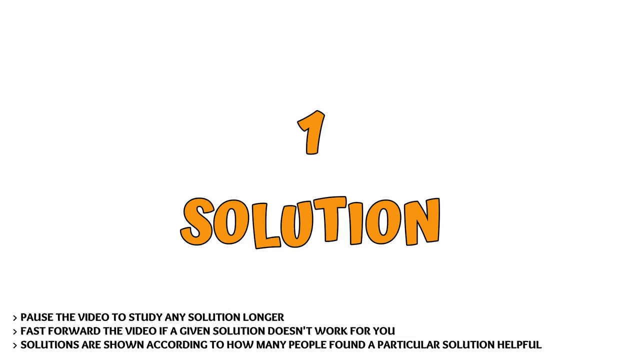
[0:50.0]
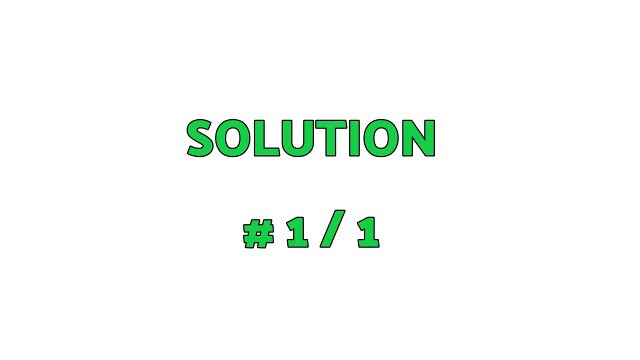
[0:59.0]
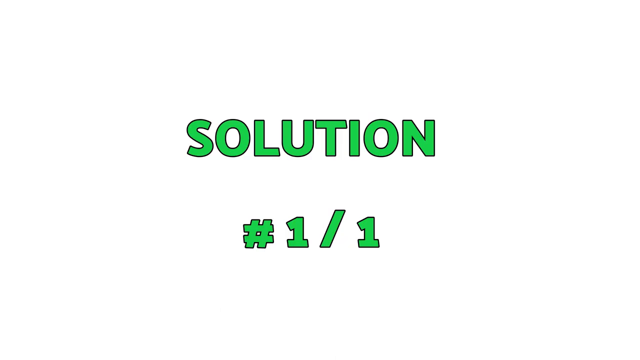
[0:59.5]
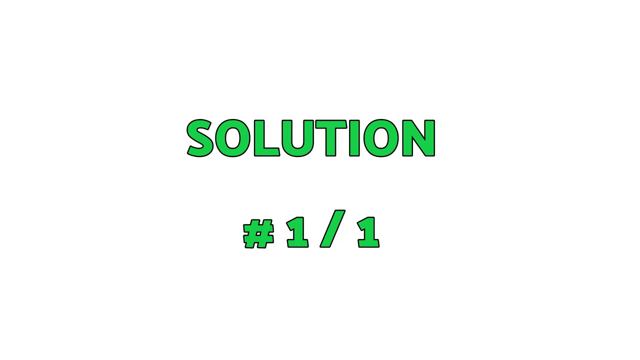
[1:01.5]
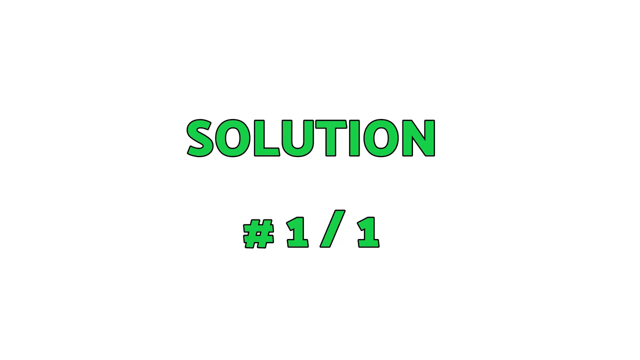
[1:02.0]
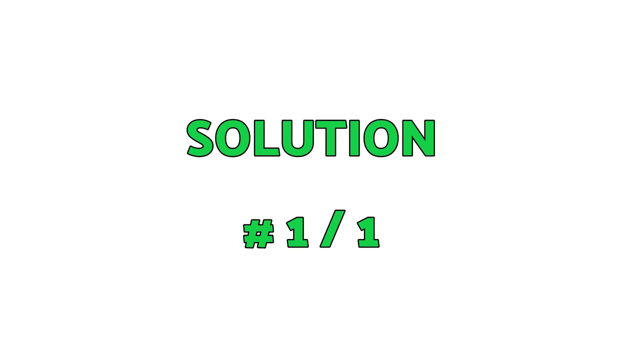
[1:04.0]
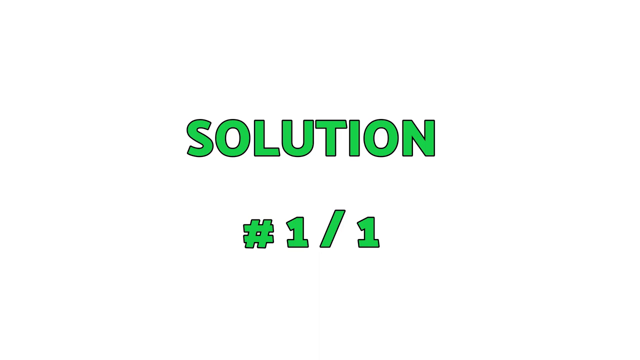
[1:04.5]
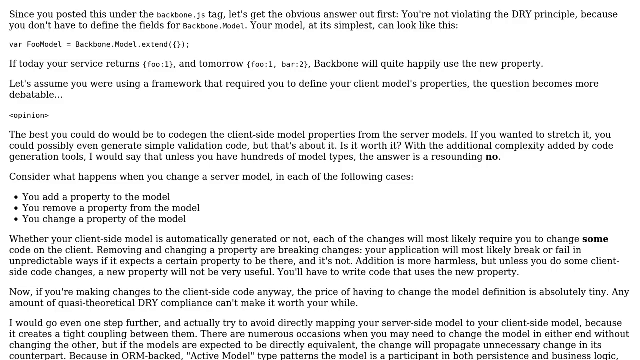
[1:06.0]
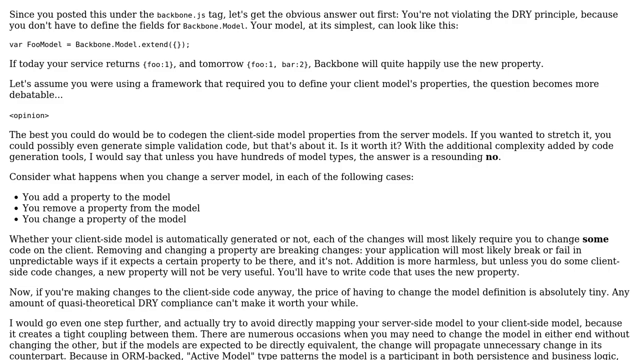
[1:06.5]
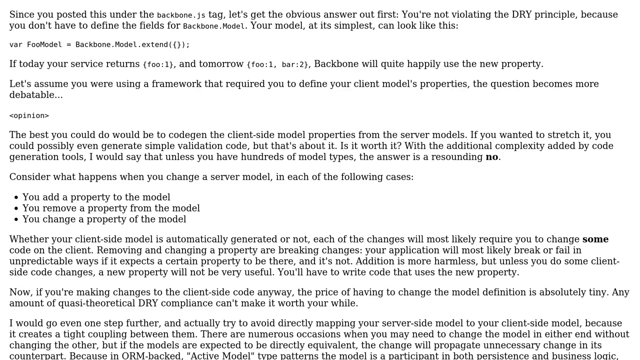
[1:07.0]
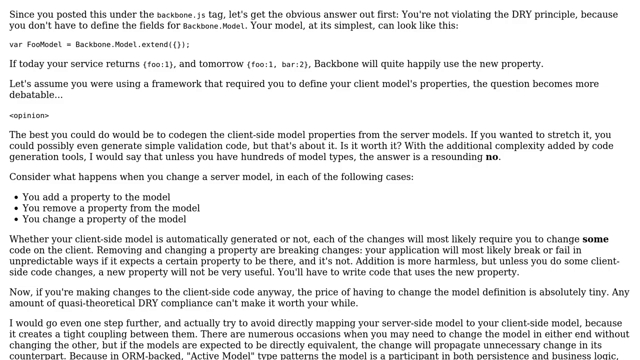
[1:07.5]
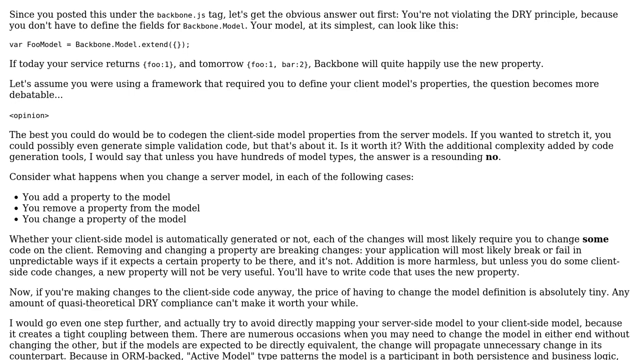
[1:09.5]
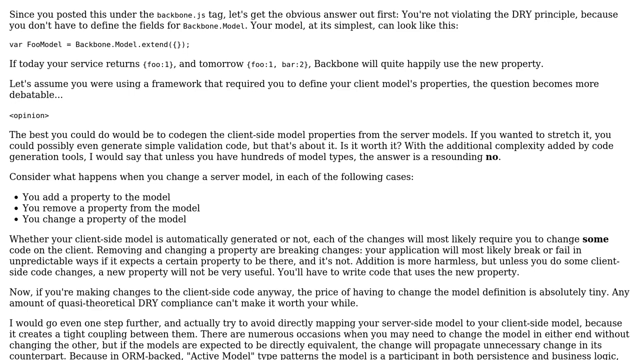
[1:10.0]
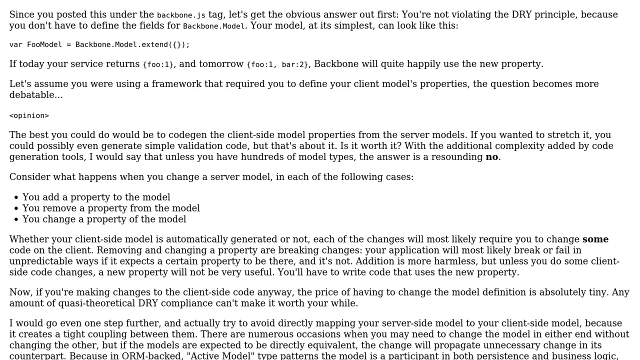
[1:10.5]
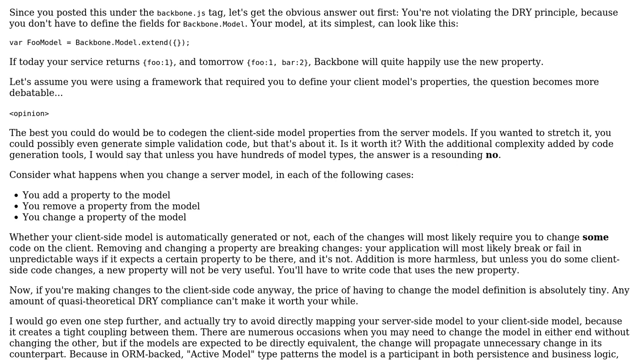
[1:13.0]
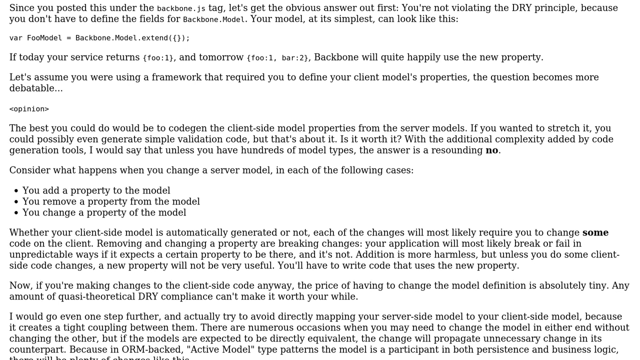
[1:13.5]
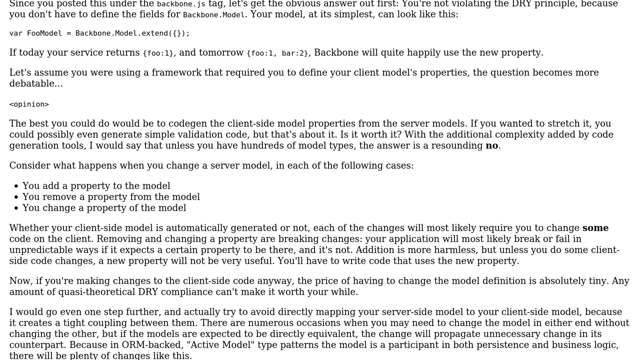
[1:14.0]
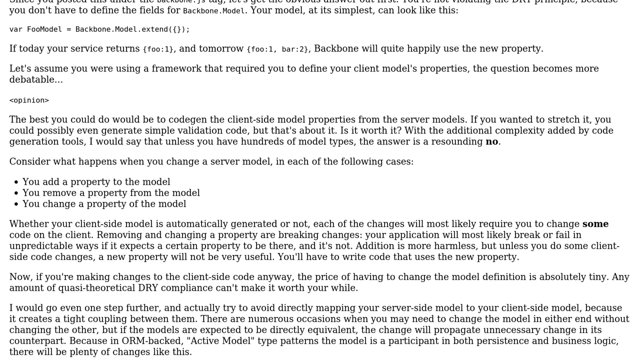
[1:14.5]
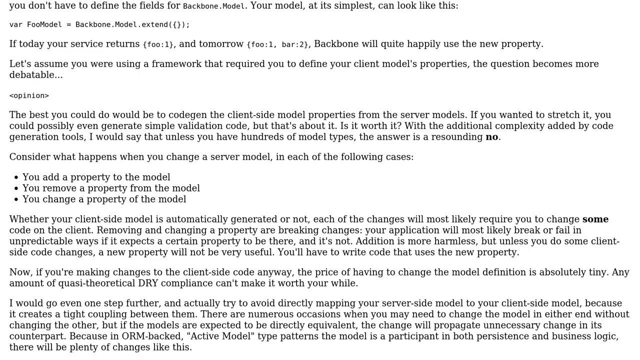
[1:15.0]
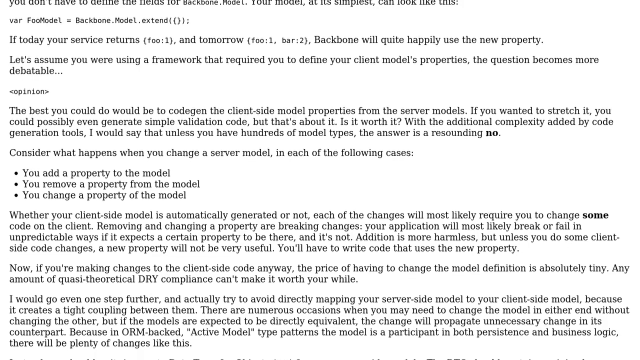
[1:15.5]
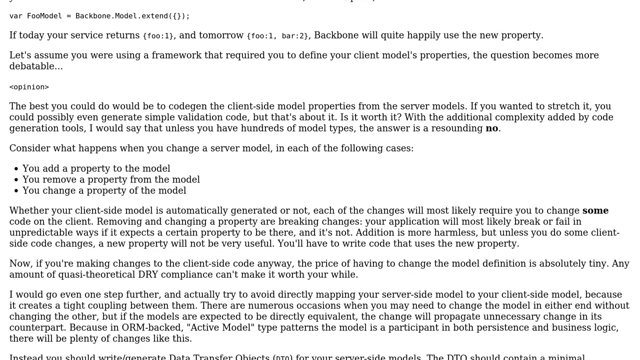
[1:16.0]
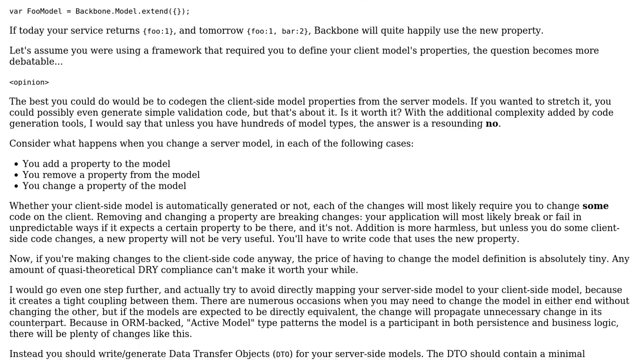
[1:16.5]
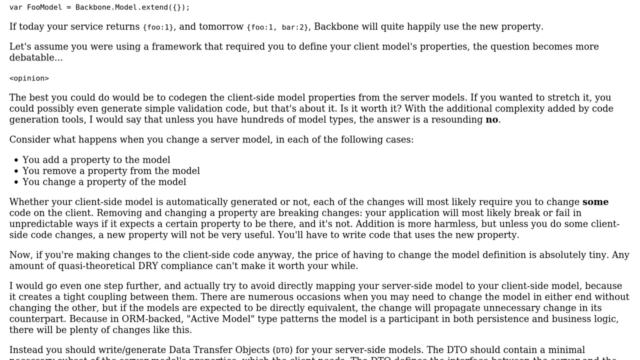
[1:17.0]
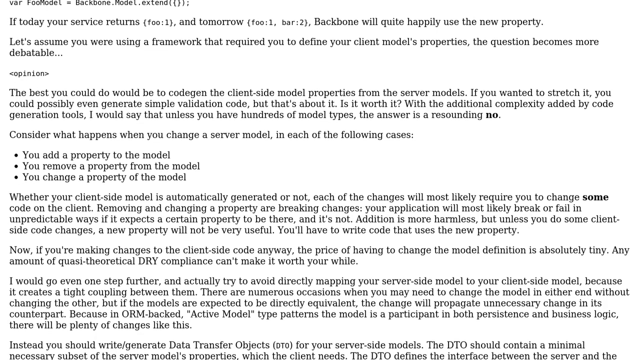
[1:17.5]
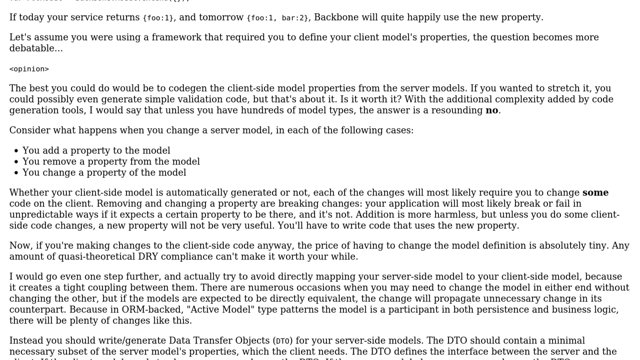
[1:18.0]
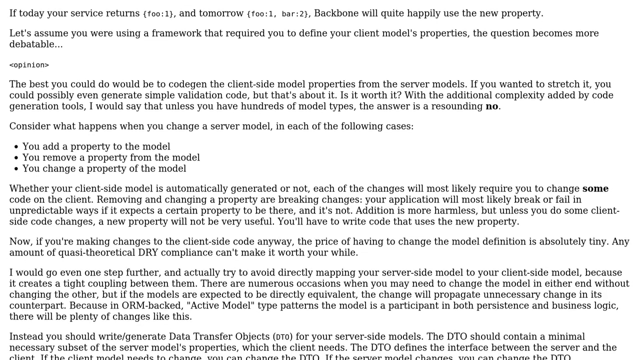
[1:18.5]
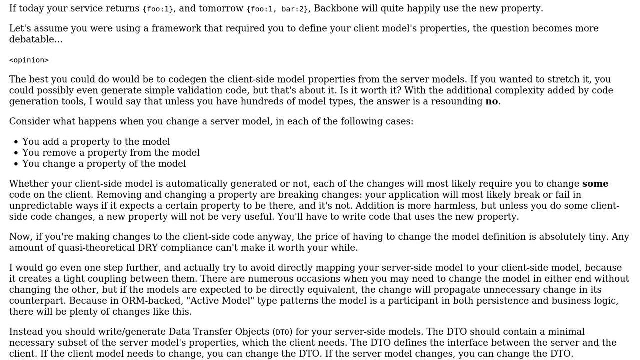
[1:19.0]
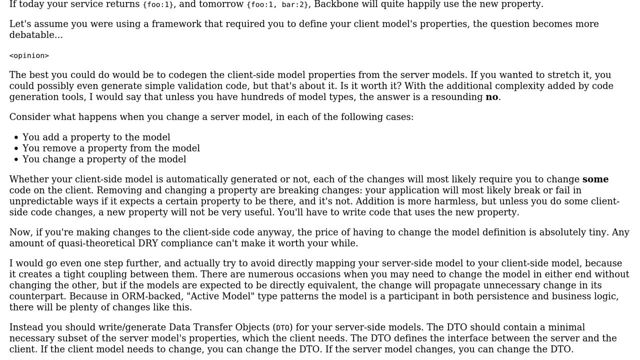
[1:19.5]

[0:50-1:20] The text "Solution #1/1" appears, and then the scene changes to a very long description filling the whole page, in black text on a white background. The text is about a particular model: how to remove a property of the model and how to change a property of the model, and it also refers to an application. The page scrolls downward to reveal more text, including something about data transfer. The text appears to be about JavaScript, and a few JavaScript commands are visible throughout; it is basically a full page of directions.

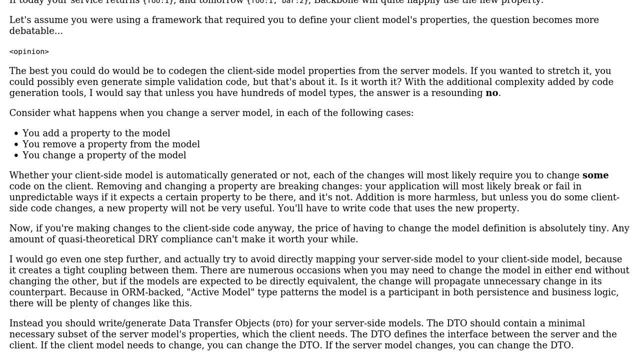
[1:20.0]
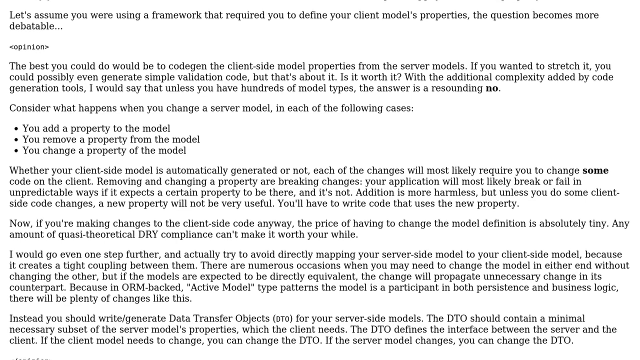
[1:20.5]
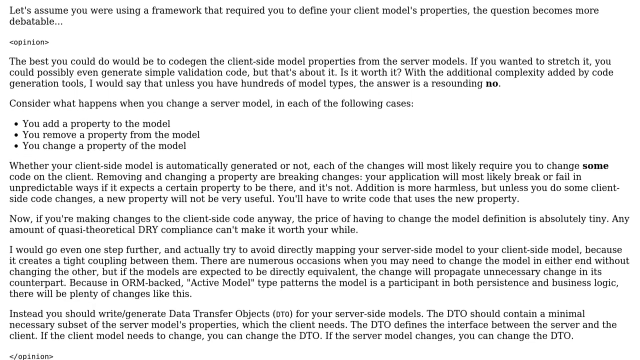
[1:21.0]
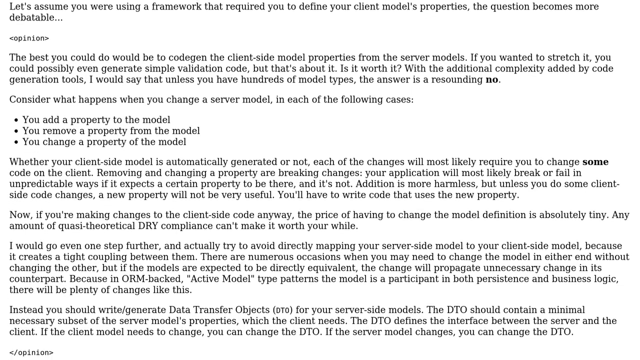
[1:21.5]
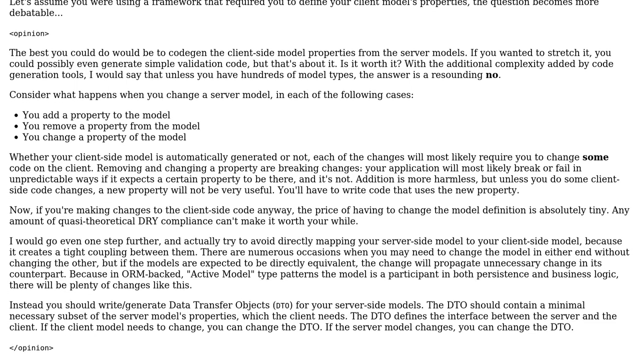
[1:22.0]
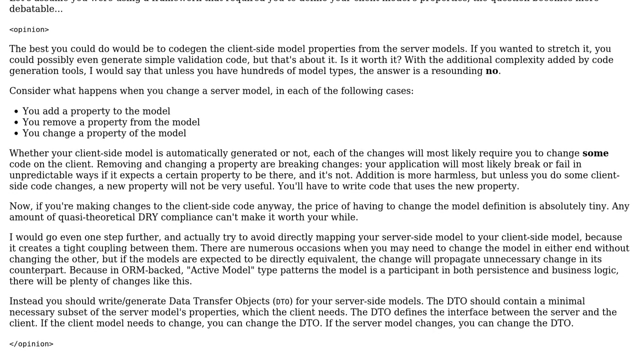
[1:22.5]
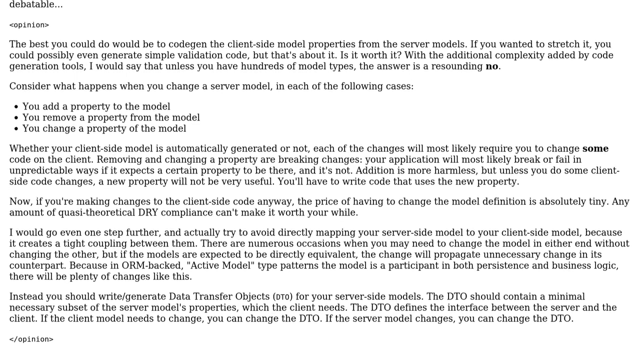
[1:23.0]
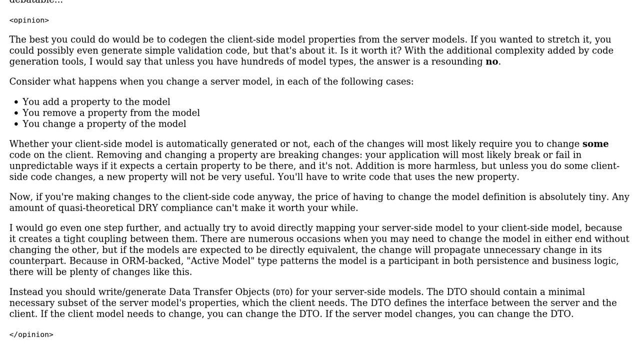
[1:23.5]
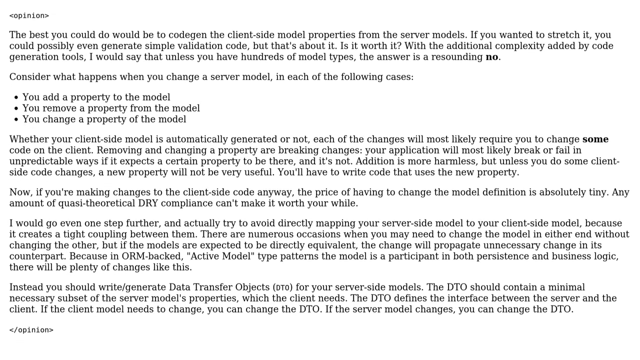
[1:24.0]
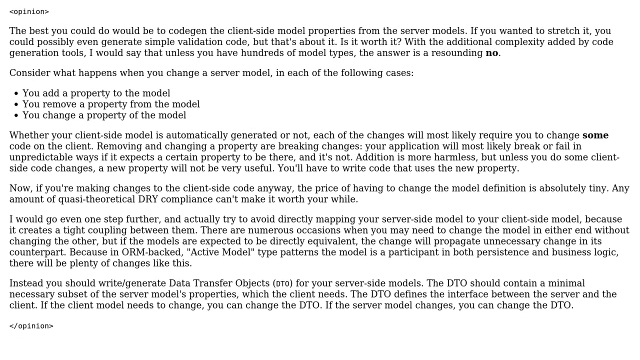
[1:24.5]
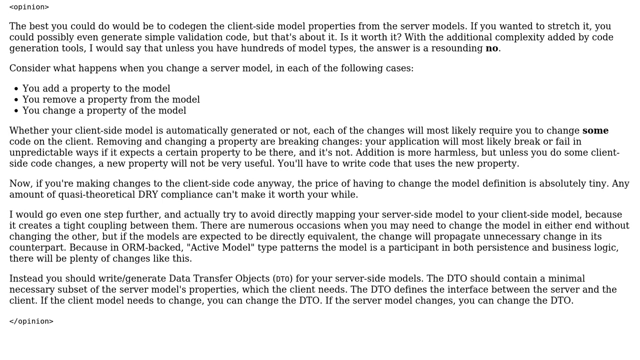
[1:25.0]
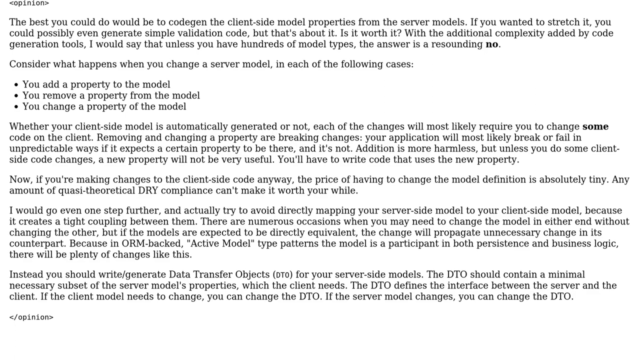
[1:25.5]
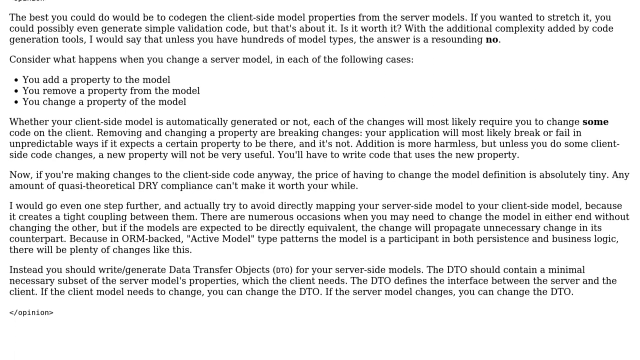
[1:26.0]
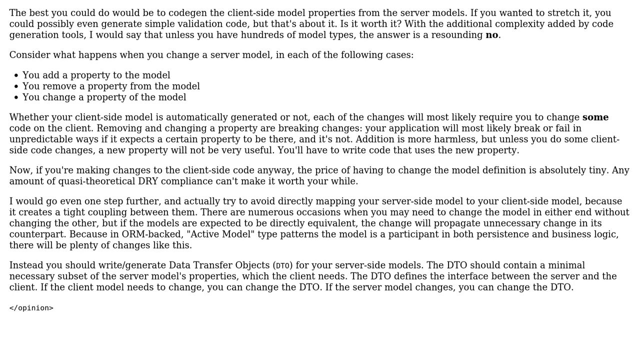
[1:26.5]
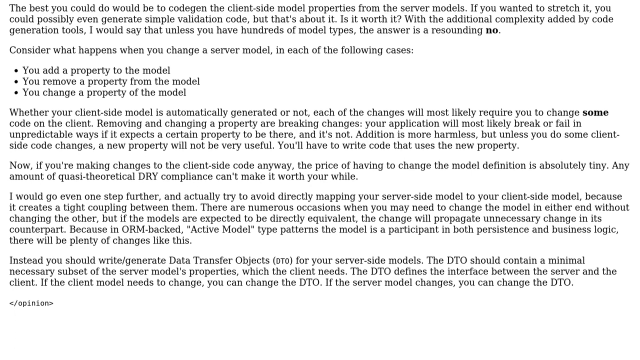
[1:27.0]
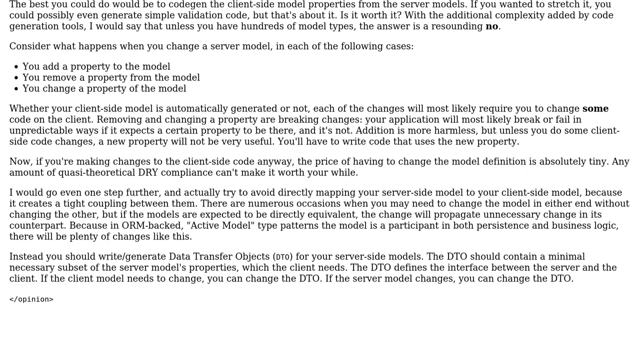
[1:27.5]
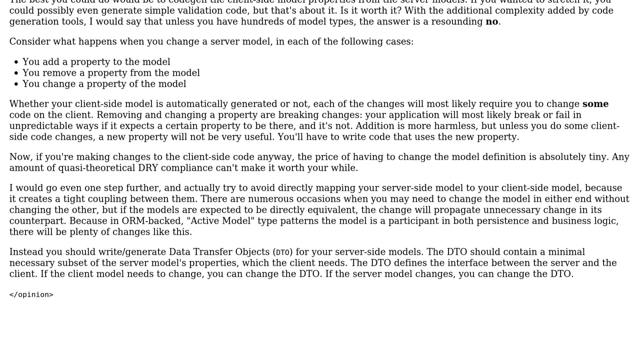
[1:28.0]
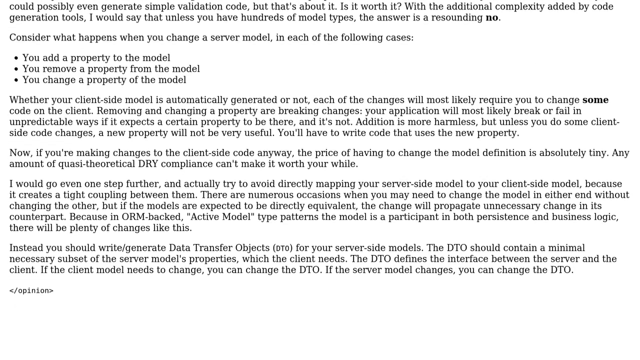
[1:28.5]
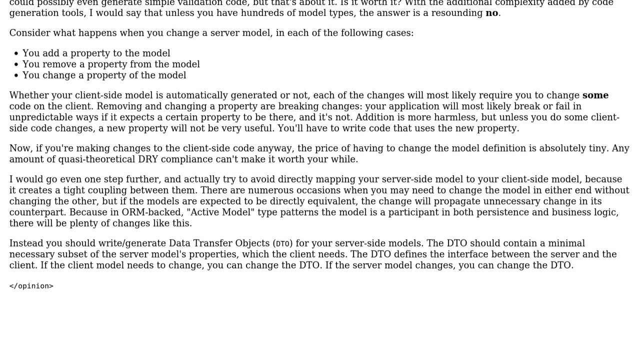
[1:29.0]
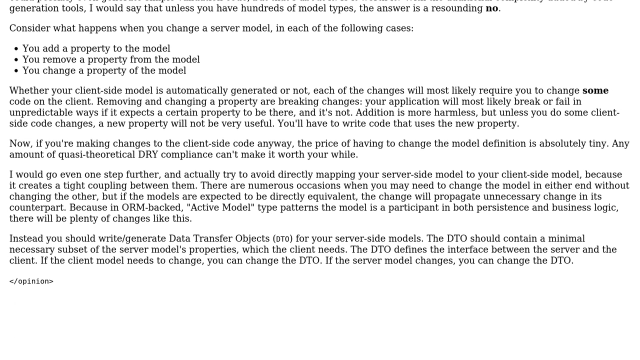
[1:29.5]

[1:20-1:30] The large block of black text on a white background continues, scrolling slowly downward so the text moves slowly upward. The text covers how to add a property to the model, how to remove a property from the model, and how to change a property of the model, along with various JavaScript topics such as how to write and generate data transfer objects, and other computer and technology subjects.